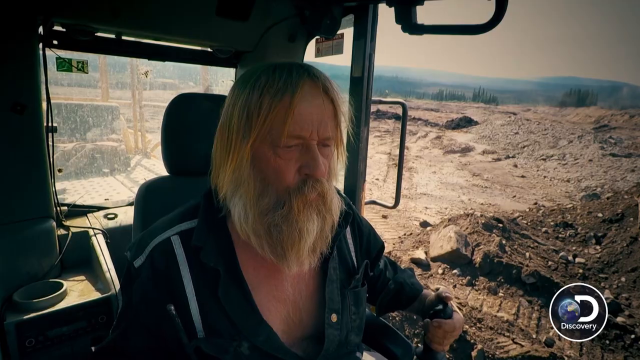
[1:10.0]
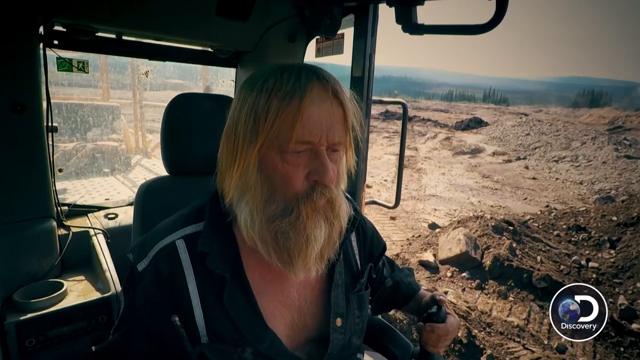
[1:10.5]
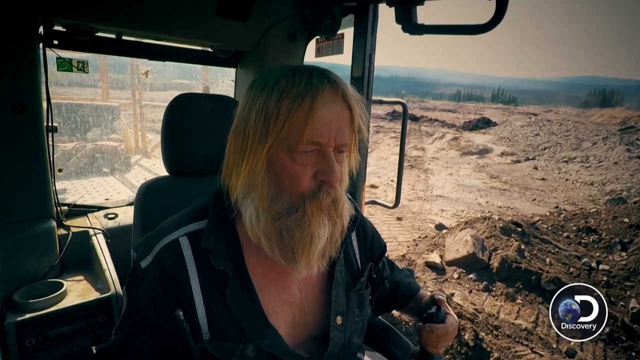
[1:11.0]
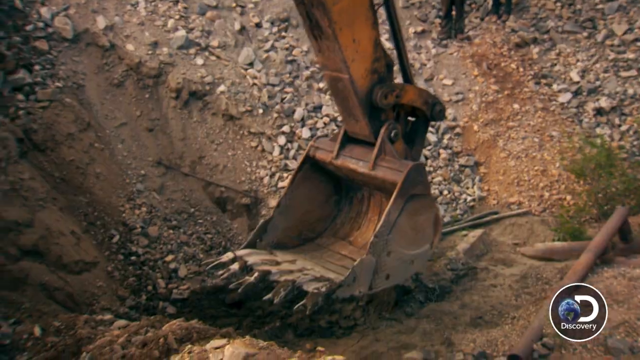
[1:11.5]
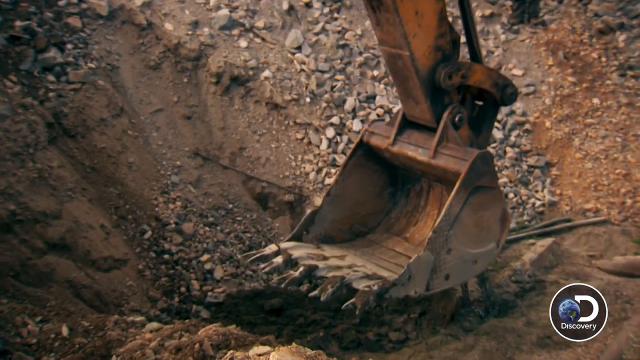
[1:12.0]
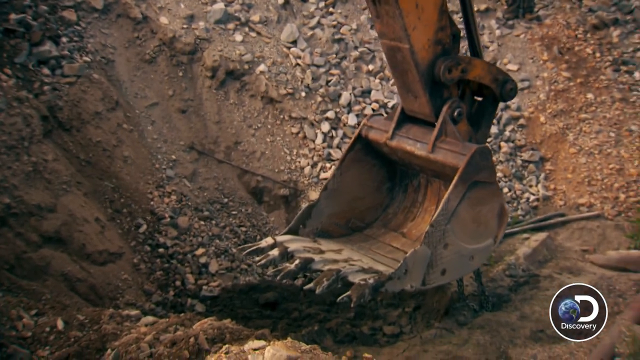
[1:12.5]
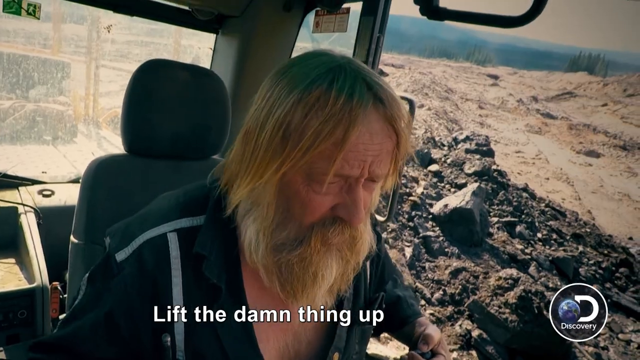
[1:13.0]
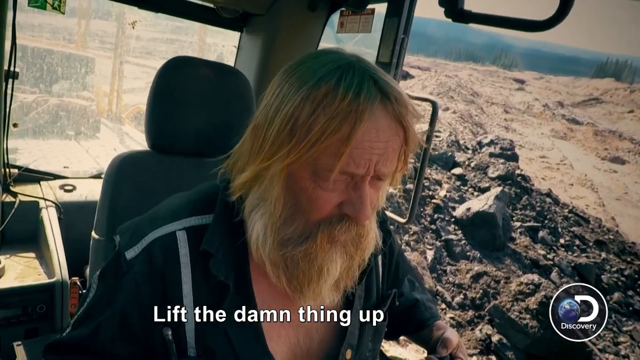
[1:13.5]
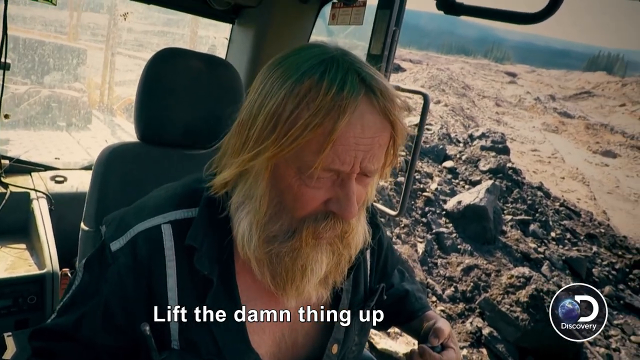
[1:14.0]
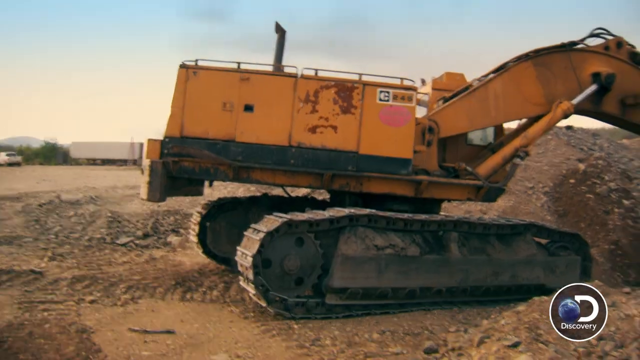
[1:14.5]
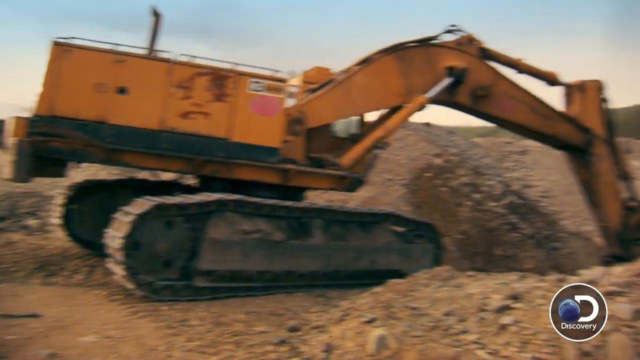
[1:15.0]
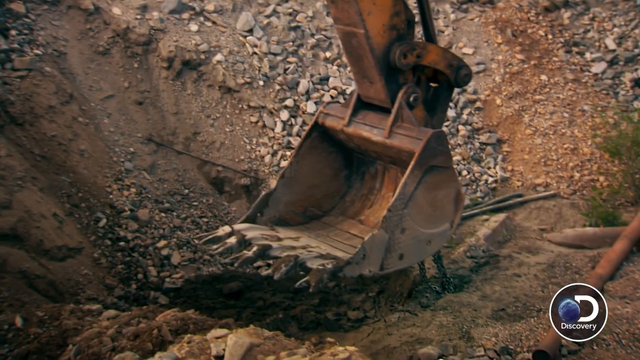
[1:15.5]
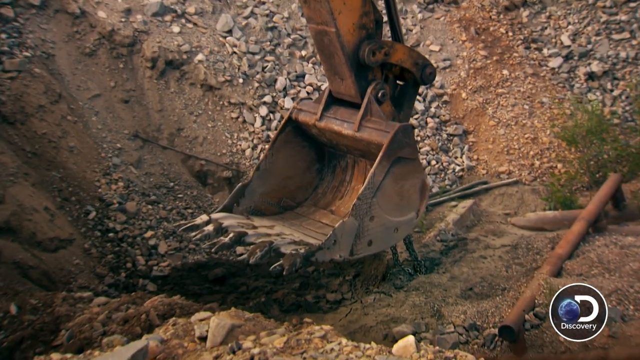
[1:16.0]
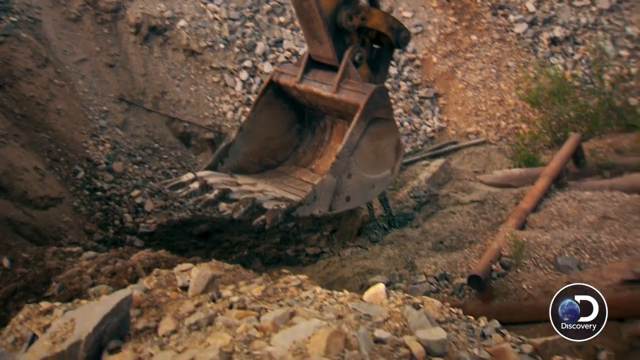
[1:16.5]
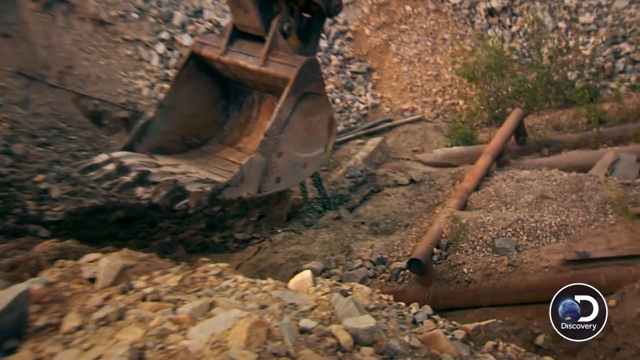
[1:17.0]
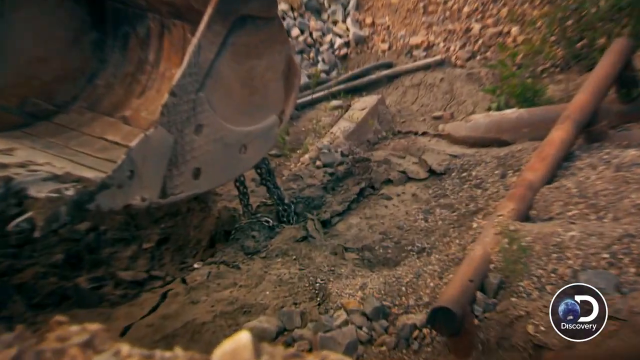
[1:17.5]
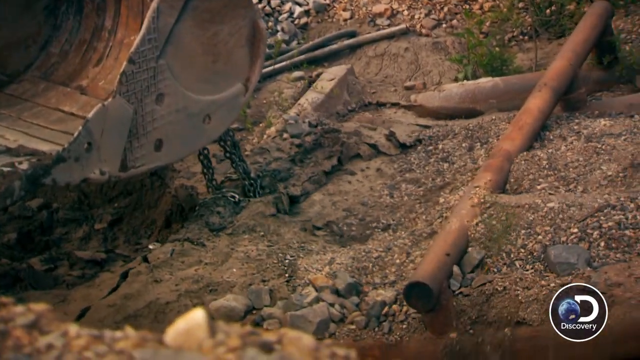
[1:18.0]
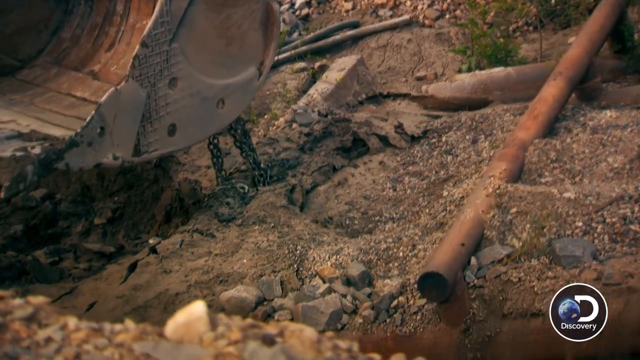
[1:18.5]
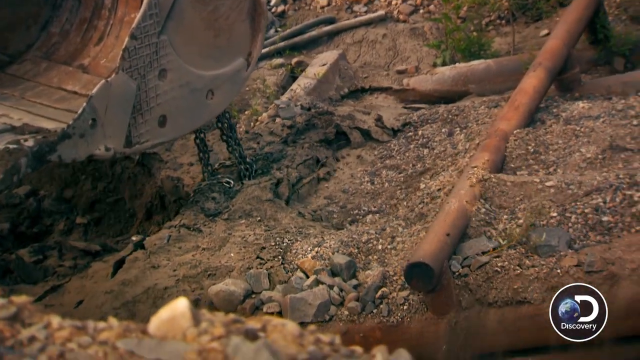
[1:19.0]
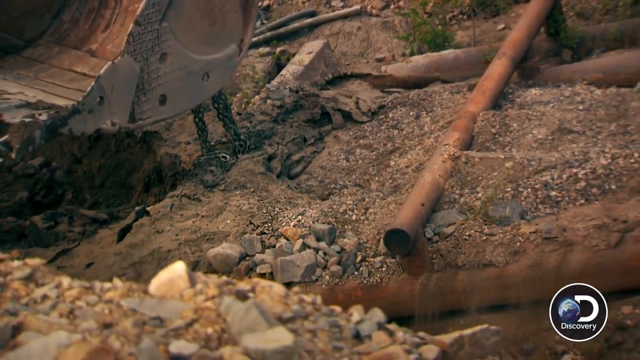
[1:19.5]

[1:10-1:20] A man with shaggy hair and a medium-length beard is inside the crane, operating it. The door to his left, on the viewer's right, is glass, and a barren landscape in the background shows he is in the middle of the mining operation. He looks down at what he is doing, and the scene shifts to the scoop on the end of the machinery he is using. Back on the man, he looks frustrated, his forehead creased, and white text at the bottom says "Lift the damn thing up." An exterior view shows the heavy machinery is yellow with extremely large oval wheels. The scene returns to the scoop, which appears to be struggling to lift what the man wants to lift.